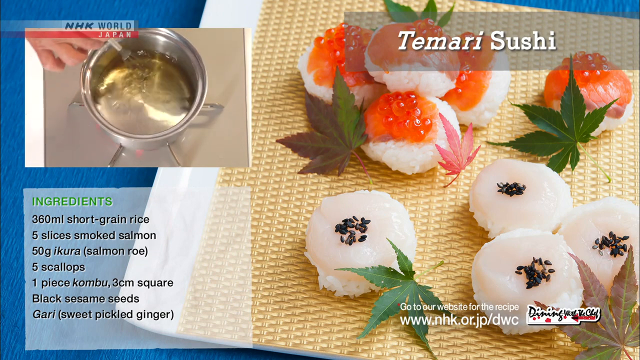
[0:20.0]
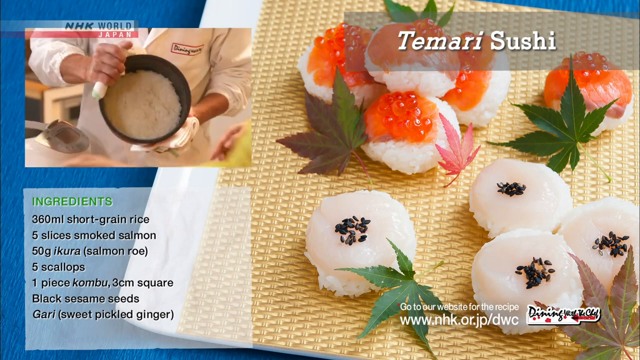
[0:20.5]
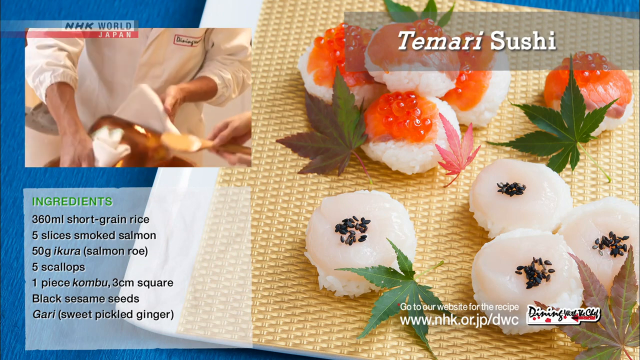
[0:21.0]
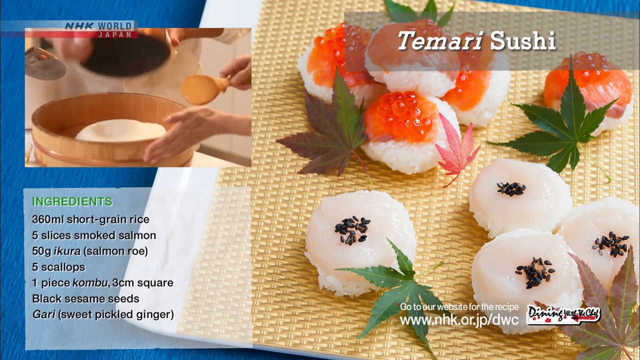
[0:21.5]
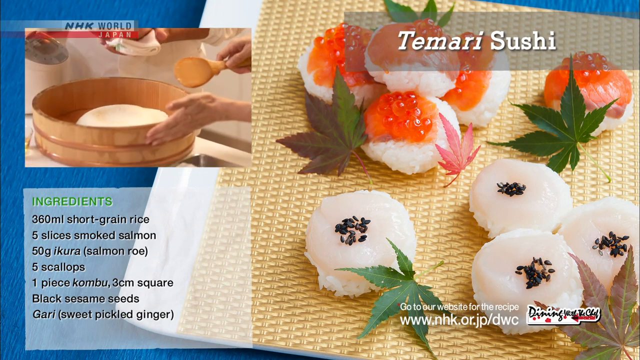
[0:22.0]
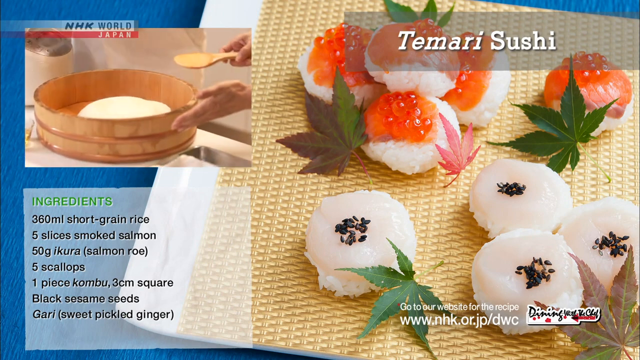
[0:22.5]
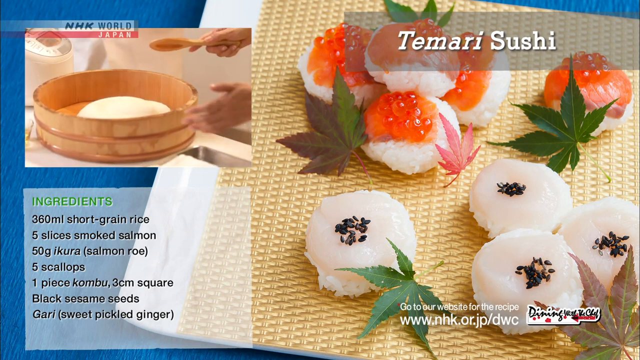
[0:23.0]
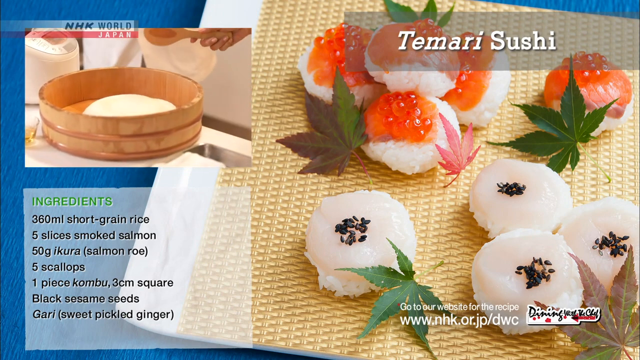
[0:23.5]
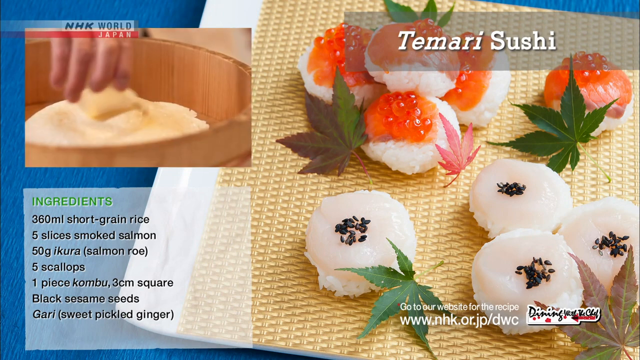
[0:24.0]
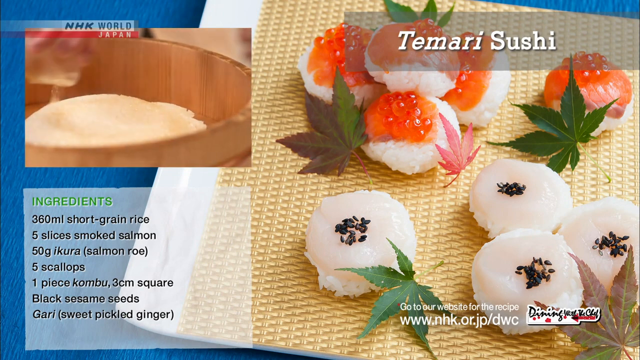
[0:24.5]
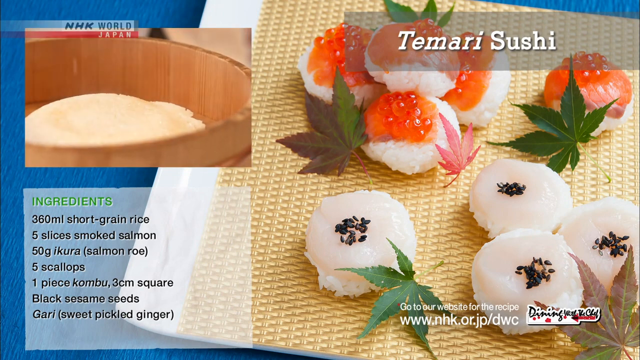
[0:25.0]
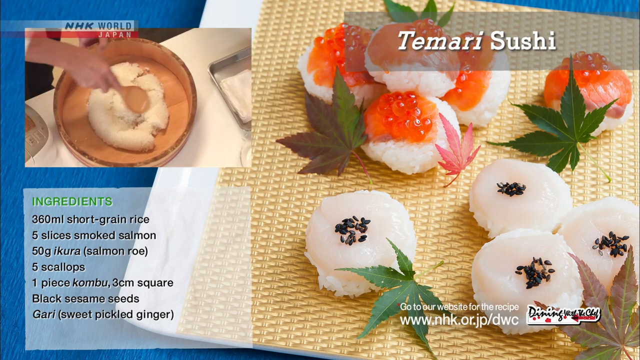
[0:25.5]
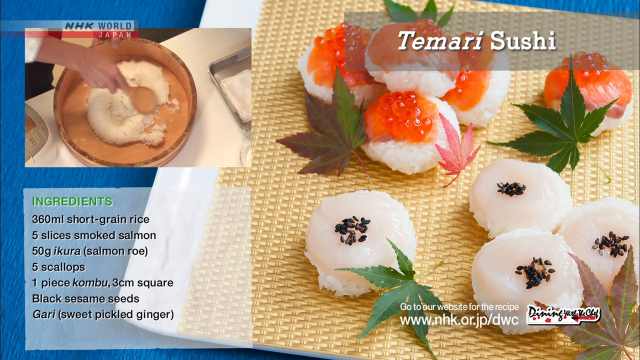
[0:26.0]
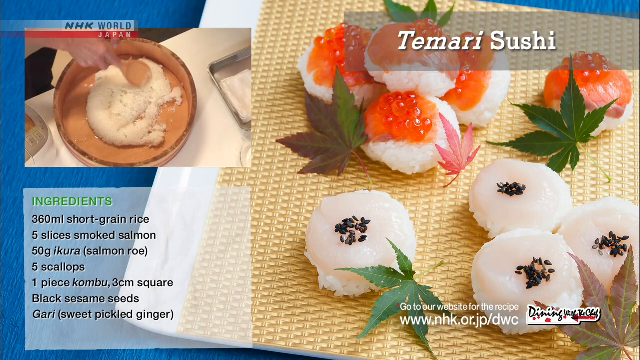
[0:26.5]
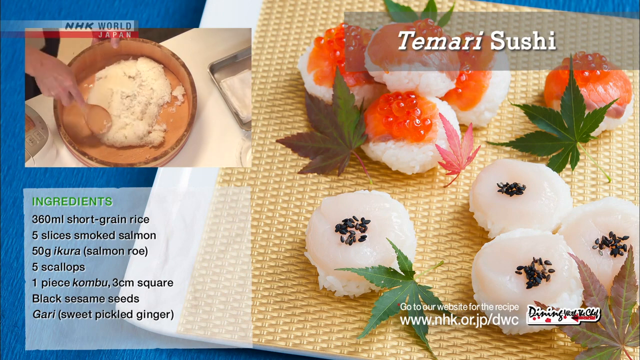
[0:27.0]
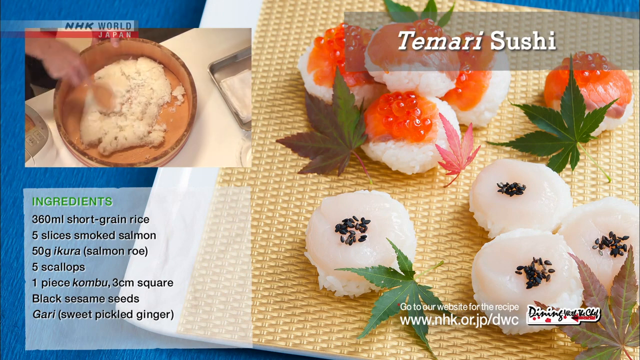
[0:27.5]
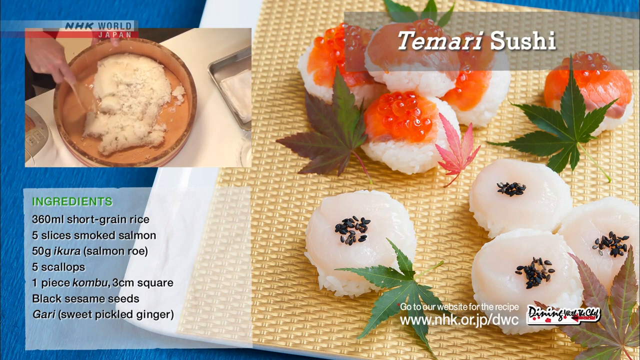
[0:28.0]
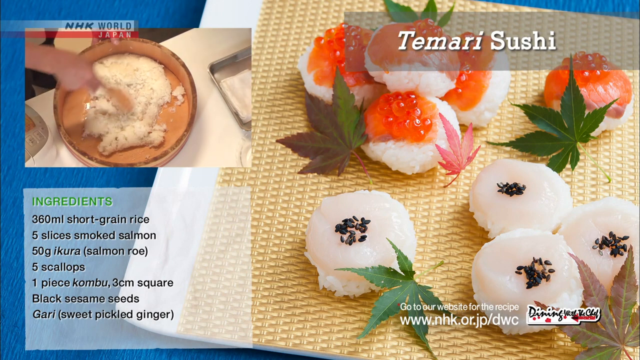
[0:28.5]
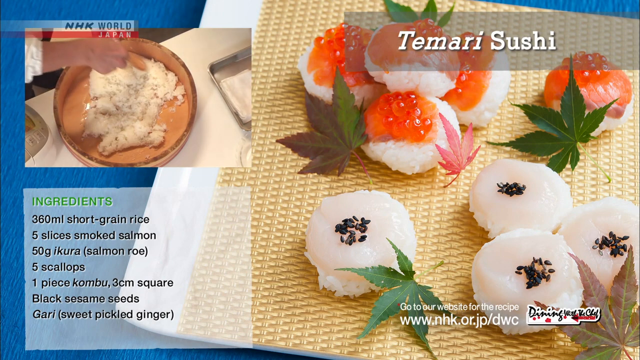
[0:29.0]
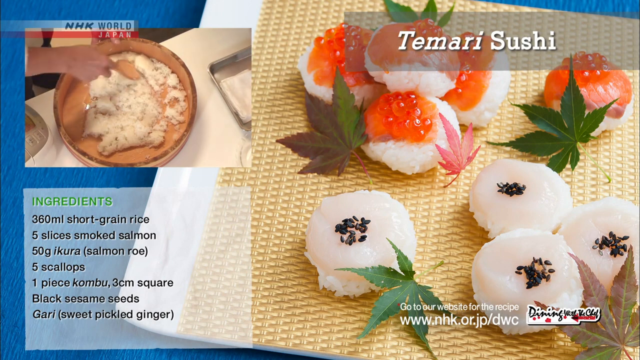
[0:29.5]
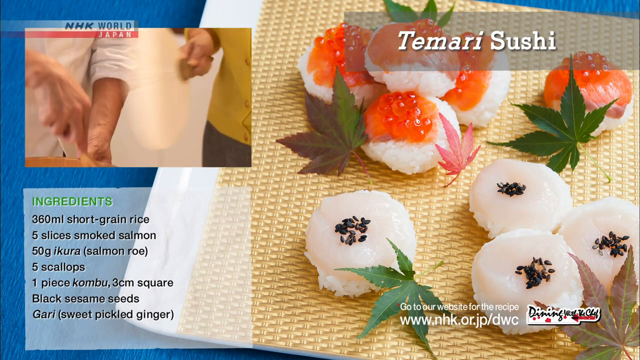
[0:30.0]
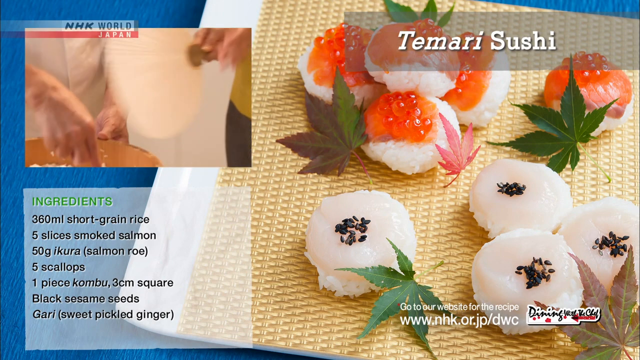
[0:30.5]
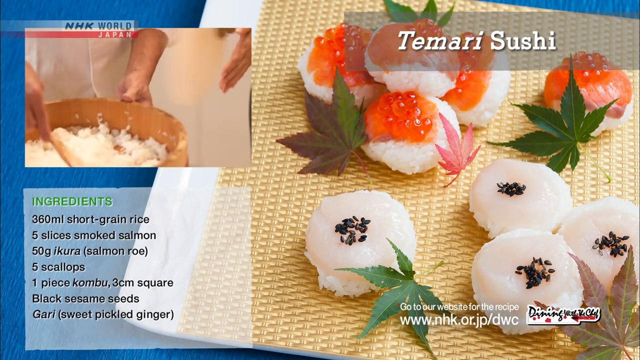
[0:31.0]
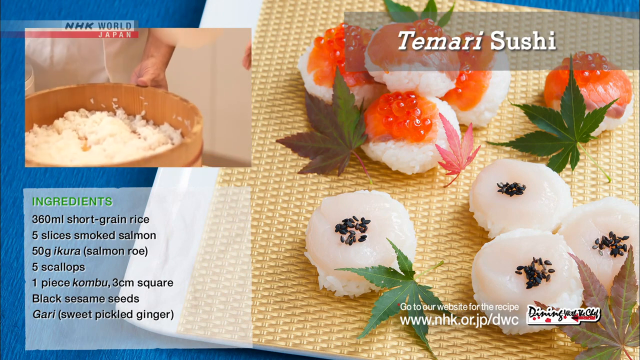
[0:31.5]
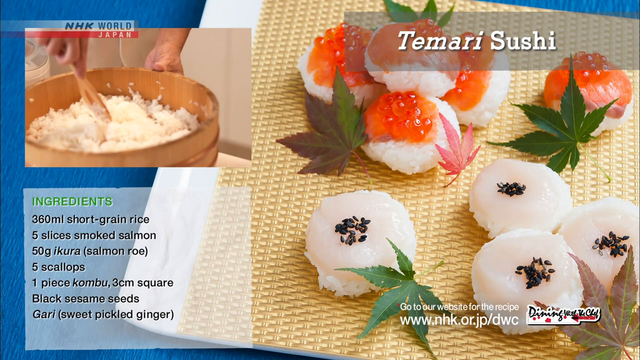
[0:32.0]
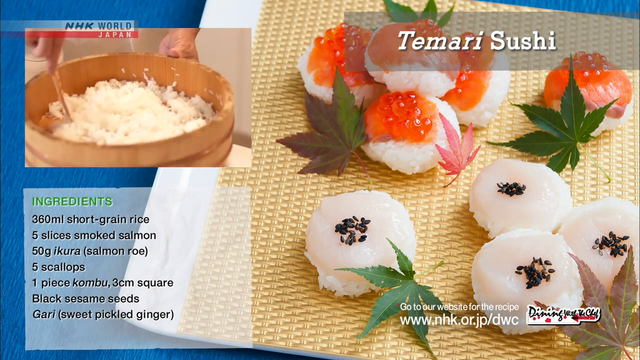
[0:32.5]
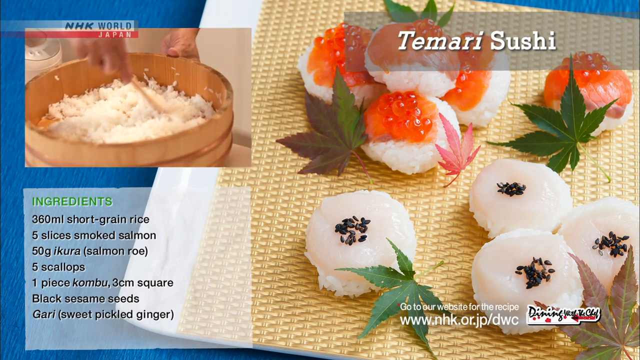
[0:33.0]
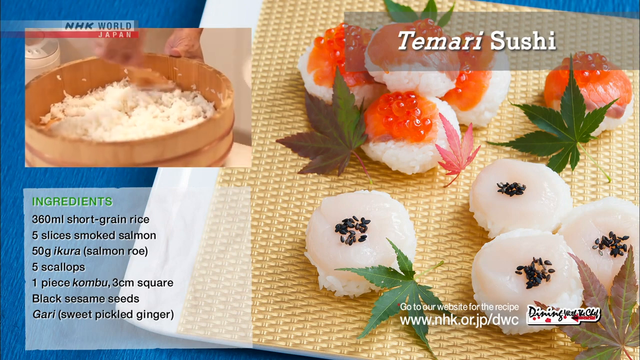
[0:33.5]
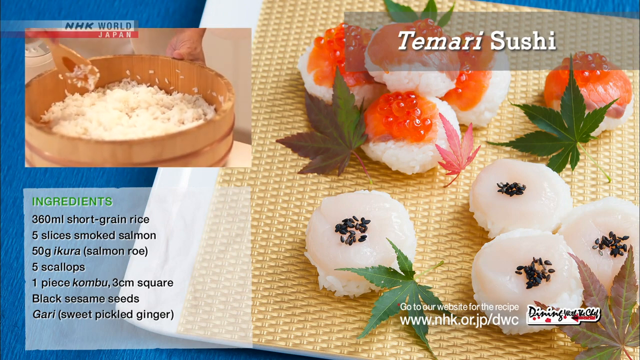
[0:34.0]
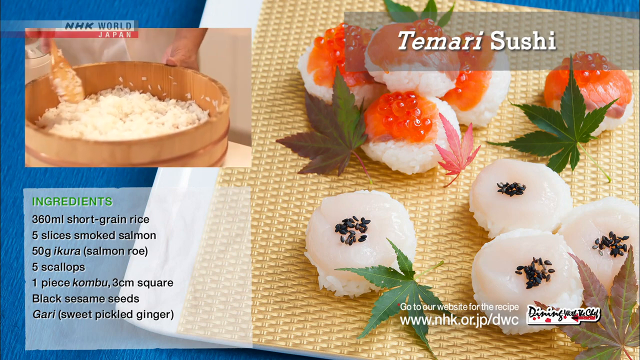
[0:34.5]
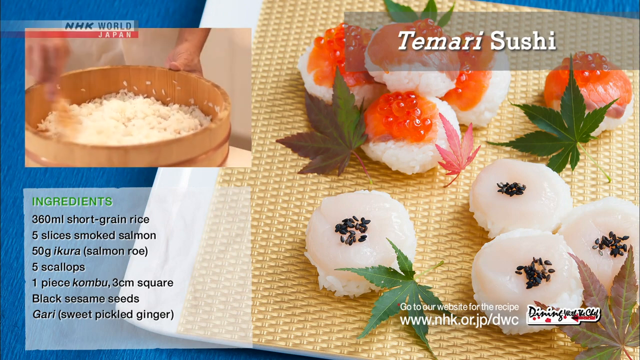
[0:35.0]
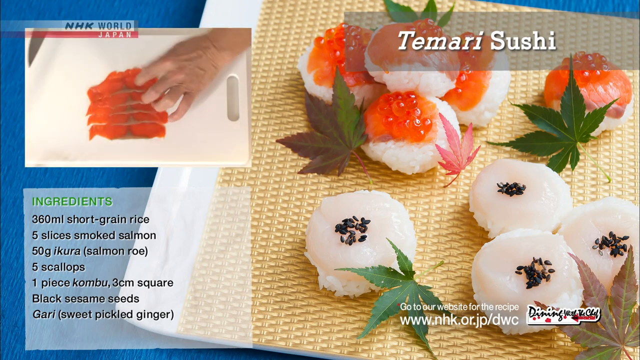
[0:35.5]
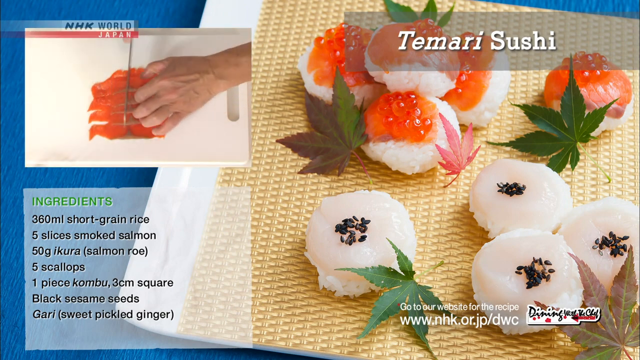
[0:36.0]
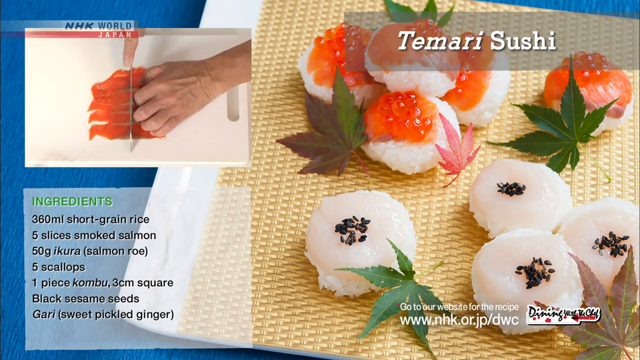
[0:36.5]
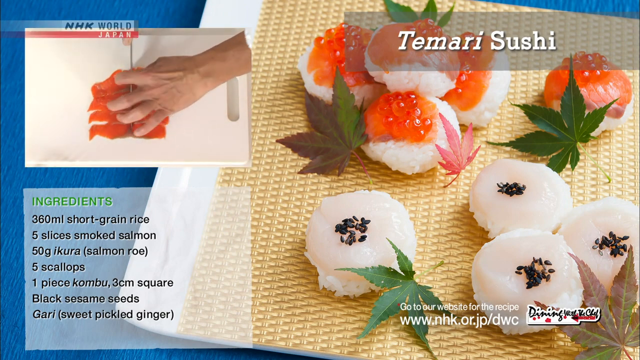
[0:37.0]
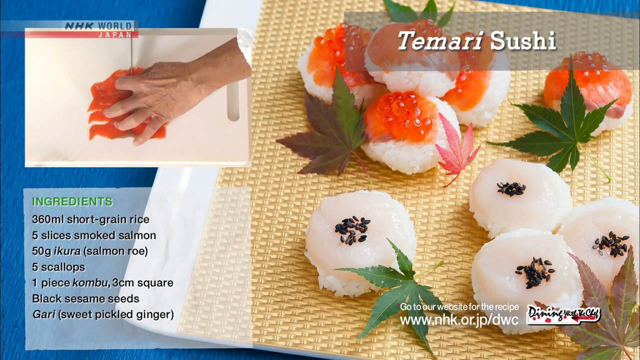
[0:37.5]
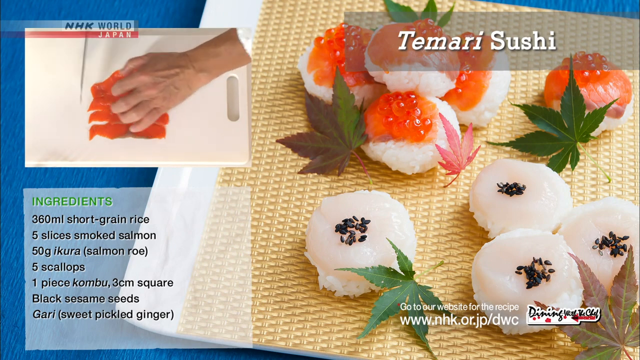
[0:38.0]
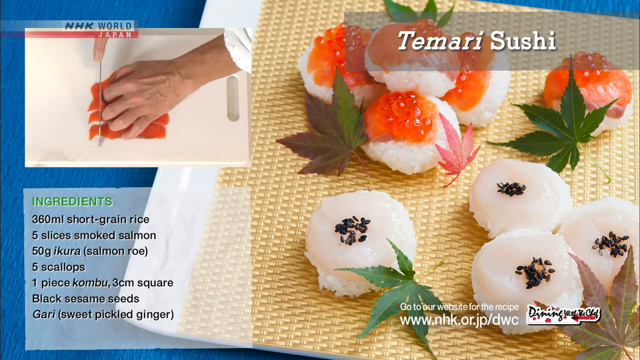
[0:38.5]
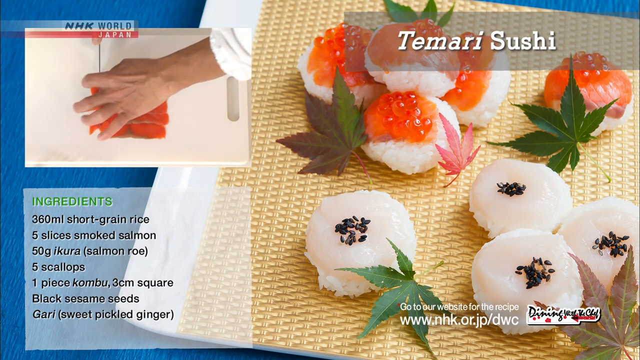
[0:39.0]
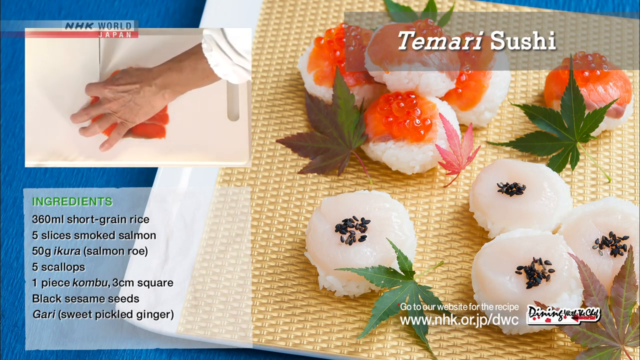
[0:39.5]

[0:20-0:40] The image of the two different types of tamari sushi remains on the right-hand side of the screen, with decorative leaves between them. One is a rice ball with salmon and fish roe; the other is white rice with scallop and black sesame seeds on top. The ingredient list is on the bottom left-hand side of the screen: 360 ml short grain rice, 5 slices smoked salmon, 50 g of ikura or salmon roe, 5 scallops, 1 piece kombu or 3 cm square, black sesame seeds, and sweet pickled ginger. In the top left-hand corner, the video on how the sushi is made continues. Somebody puts white rice into a bamboo bowl and flattens it out after adding what is apparently rice vinegar. Another person fans the rice to cool it down. A person then cuts up the piece of smoked salmon and then grabs a piece of scallop.